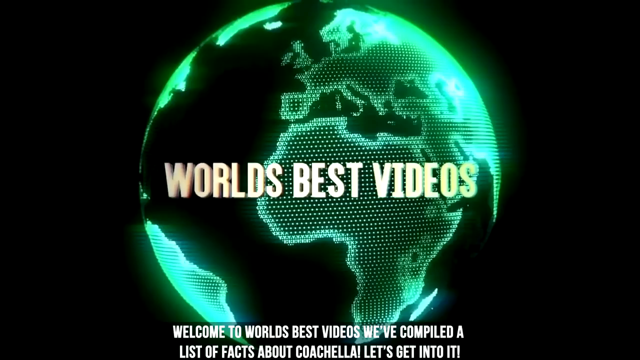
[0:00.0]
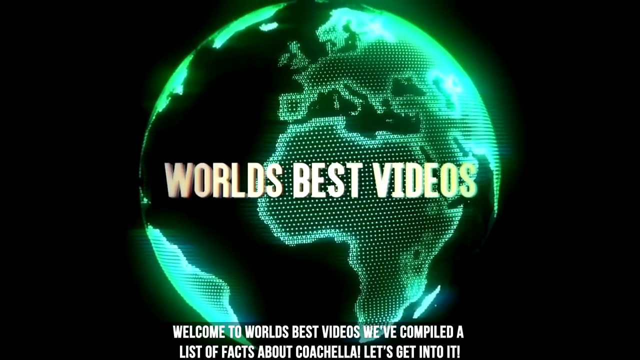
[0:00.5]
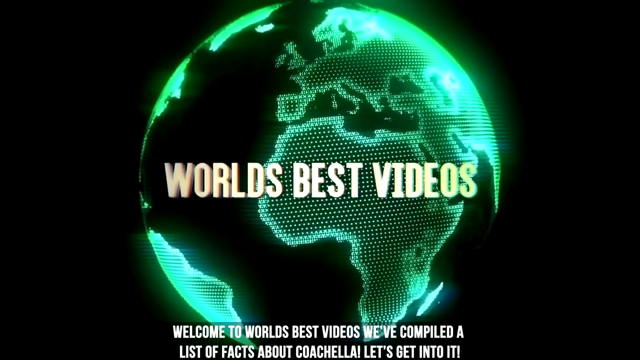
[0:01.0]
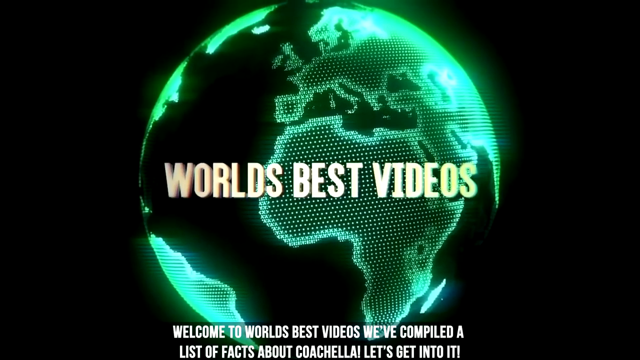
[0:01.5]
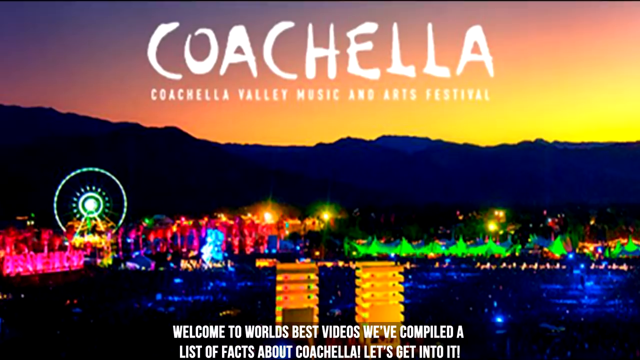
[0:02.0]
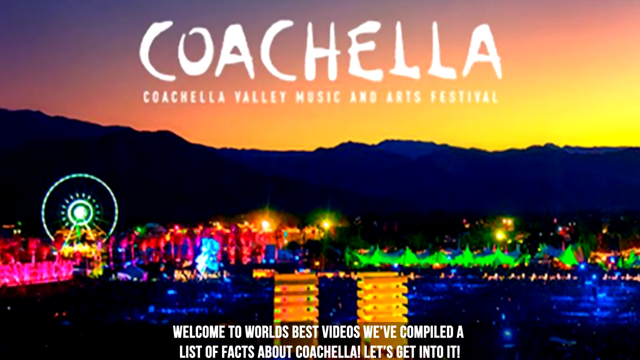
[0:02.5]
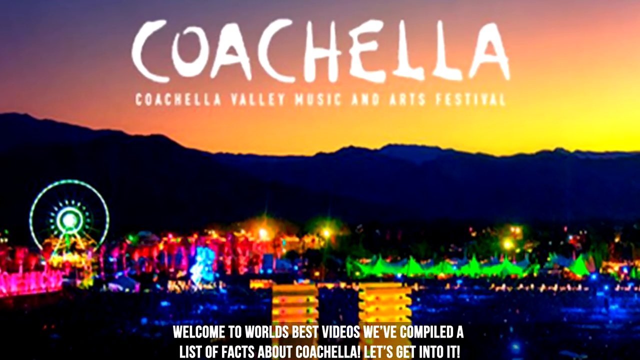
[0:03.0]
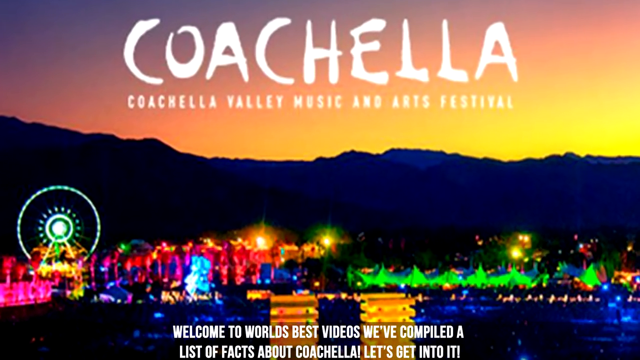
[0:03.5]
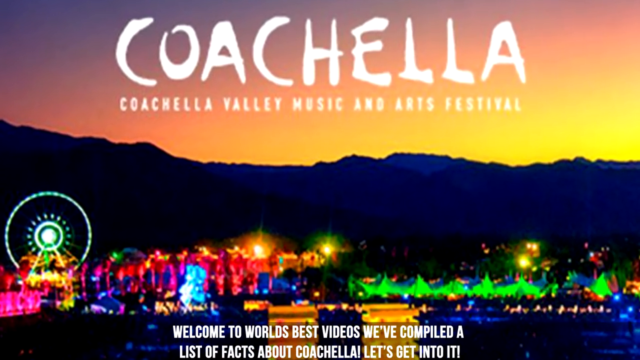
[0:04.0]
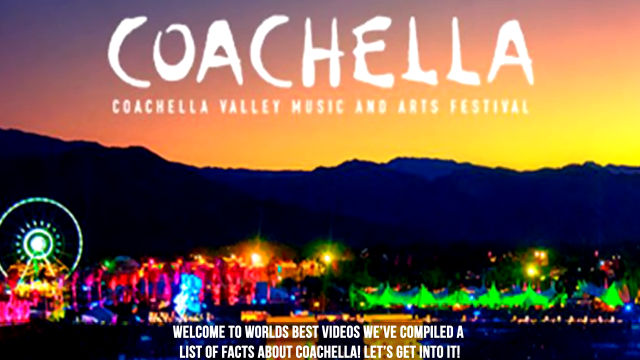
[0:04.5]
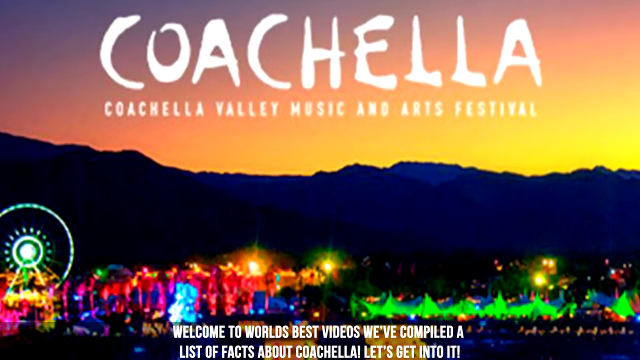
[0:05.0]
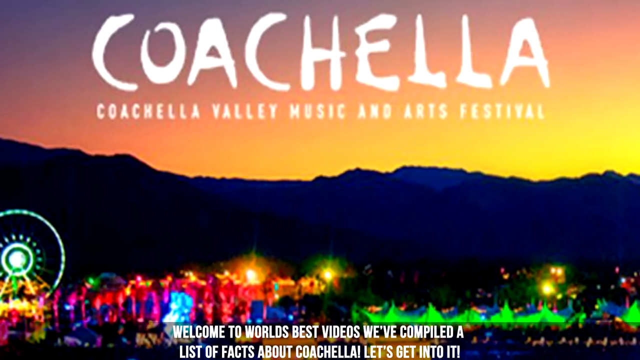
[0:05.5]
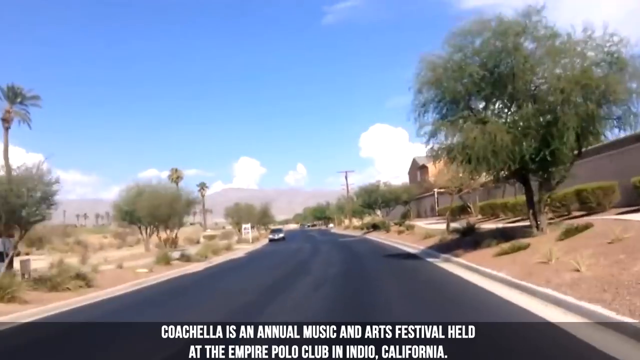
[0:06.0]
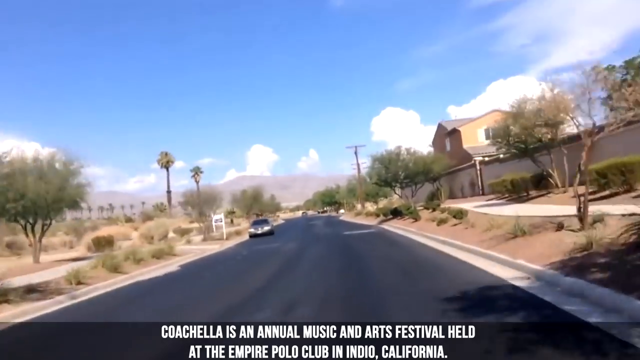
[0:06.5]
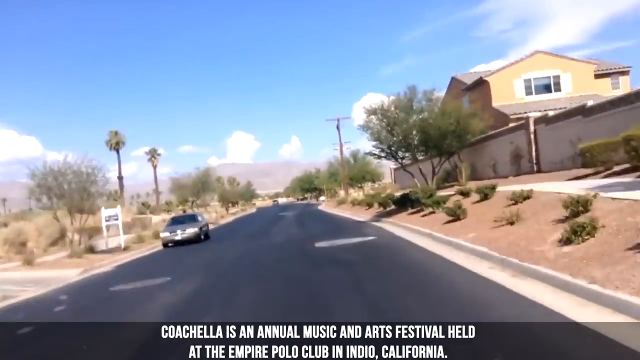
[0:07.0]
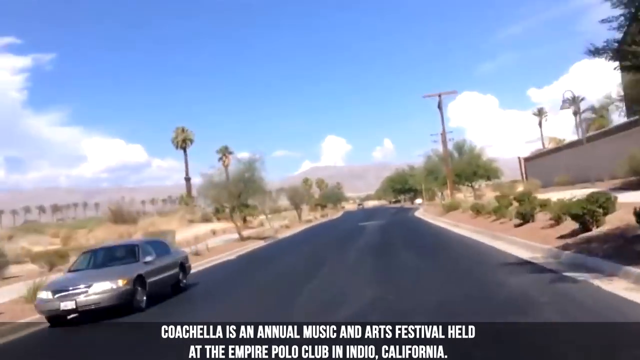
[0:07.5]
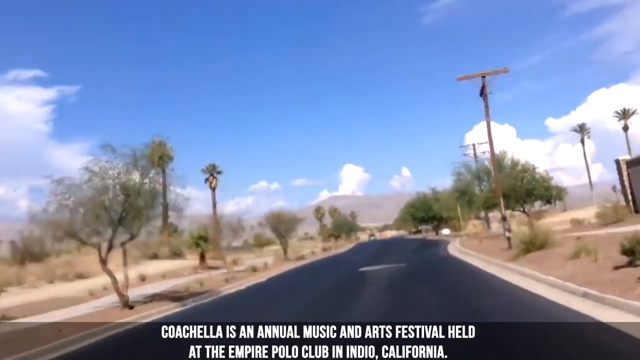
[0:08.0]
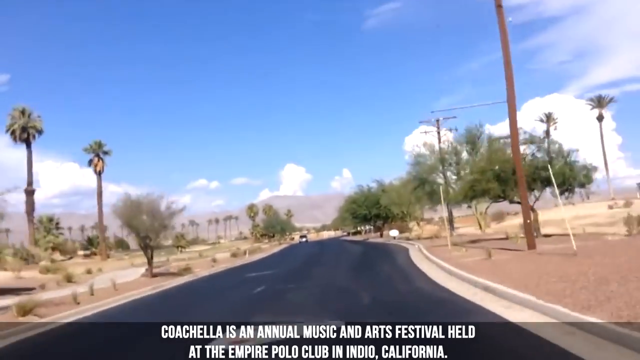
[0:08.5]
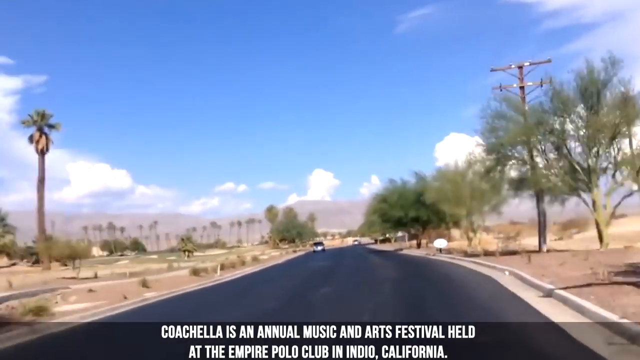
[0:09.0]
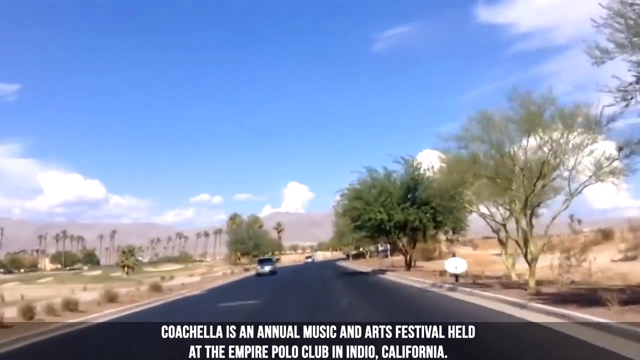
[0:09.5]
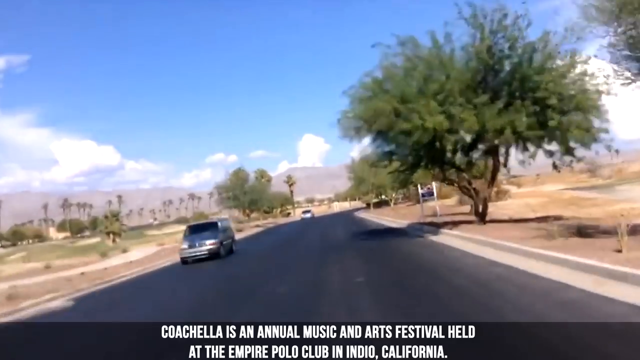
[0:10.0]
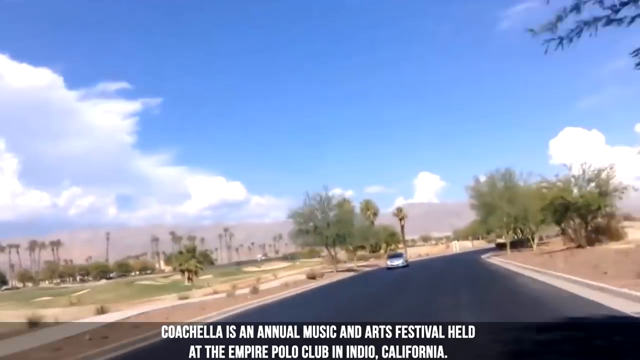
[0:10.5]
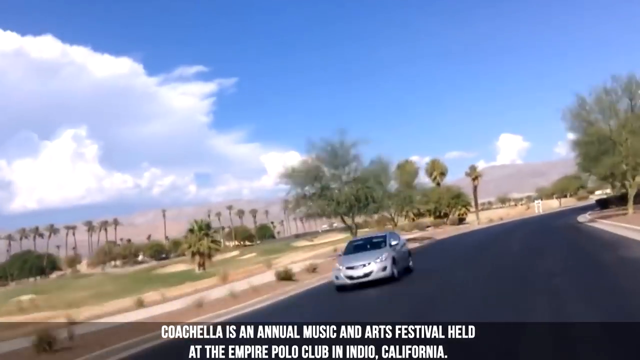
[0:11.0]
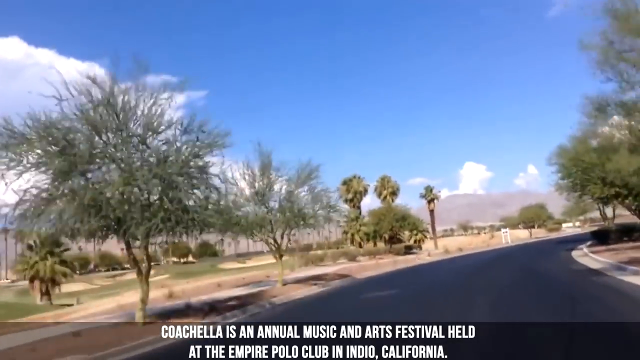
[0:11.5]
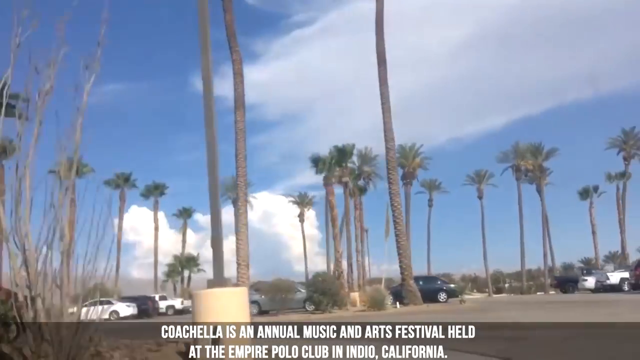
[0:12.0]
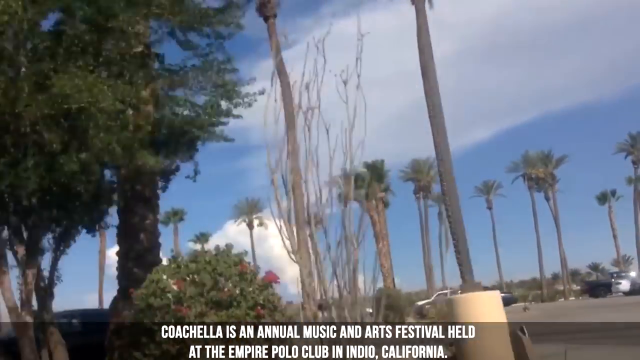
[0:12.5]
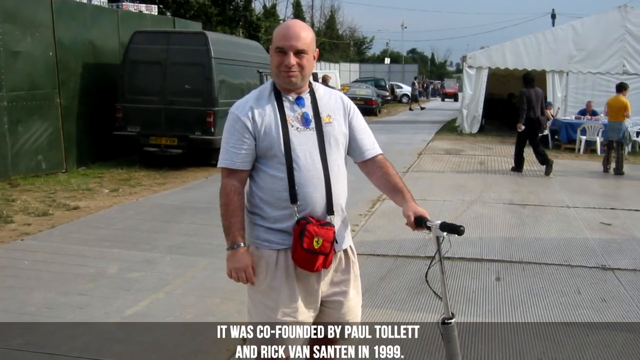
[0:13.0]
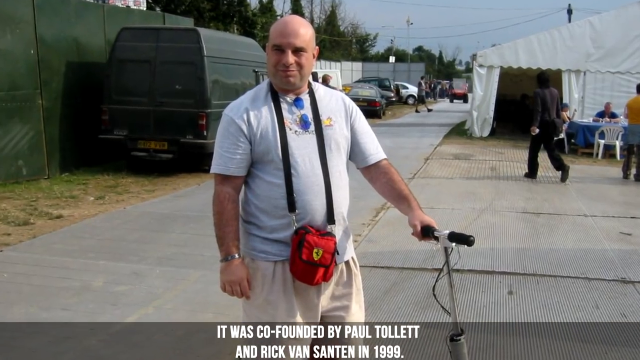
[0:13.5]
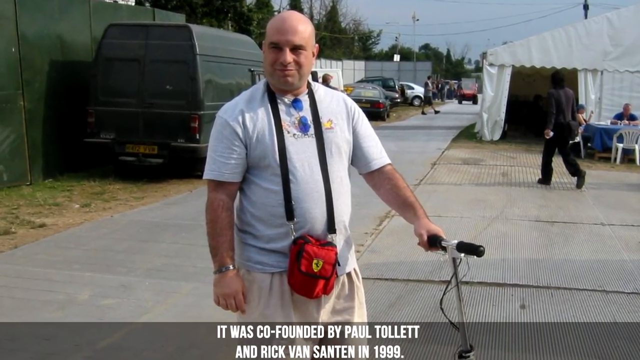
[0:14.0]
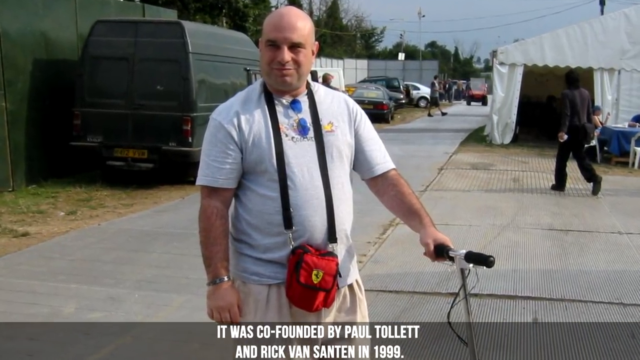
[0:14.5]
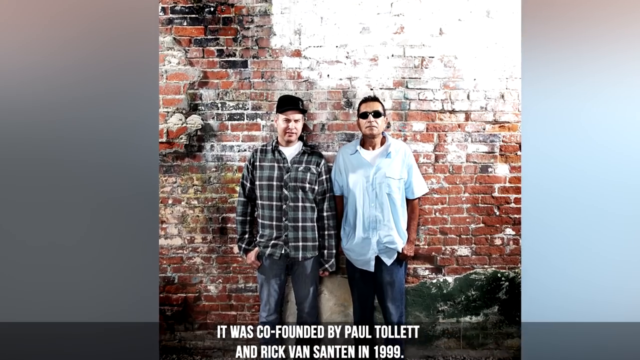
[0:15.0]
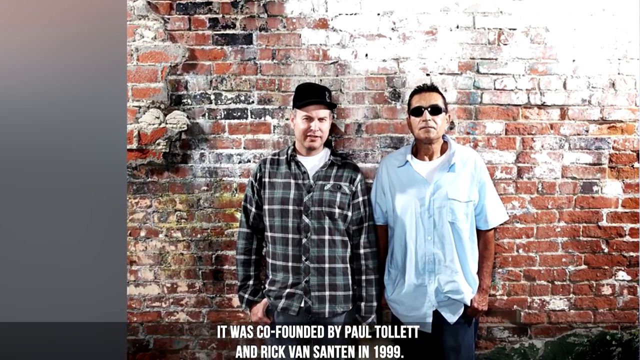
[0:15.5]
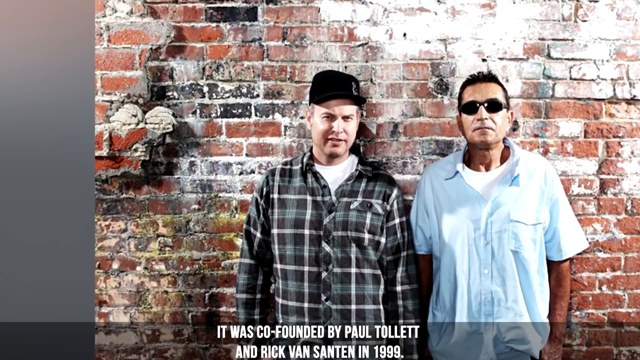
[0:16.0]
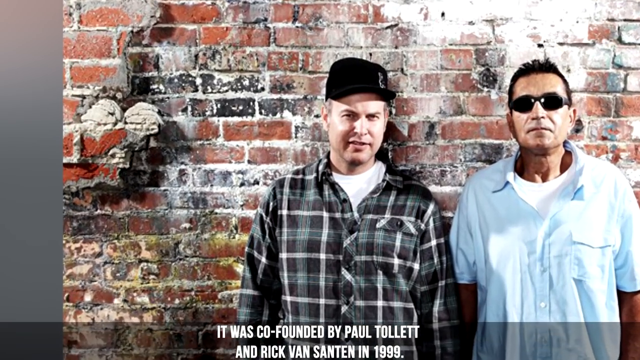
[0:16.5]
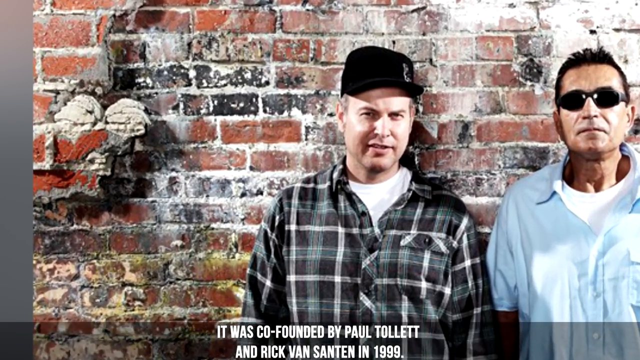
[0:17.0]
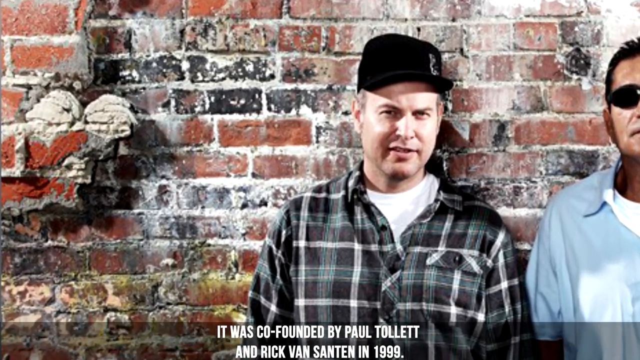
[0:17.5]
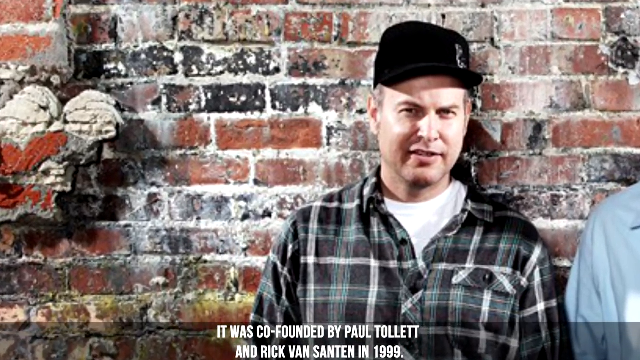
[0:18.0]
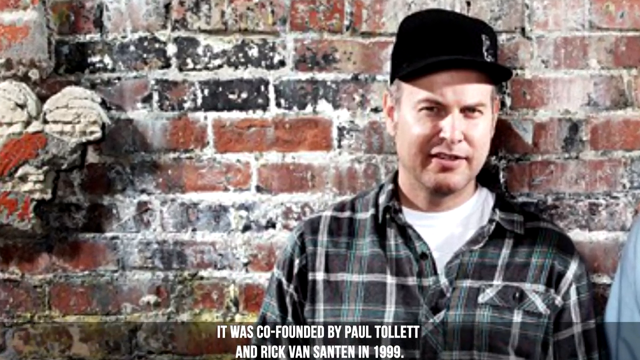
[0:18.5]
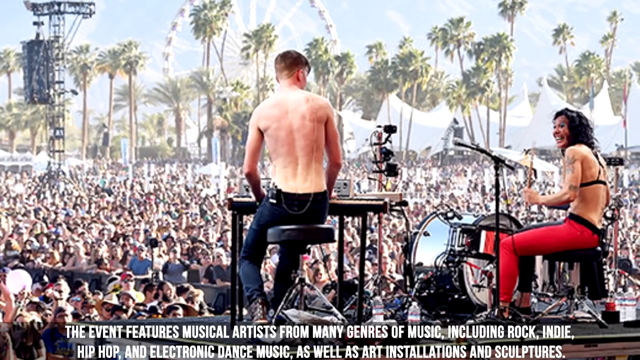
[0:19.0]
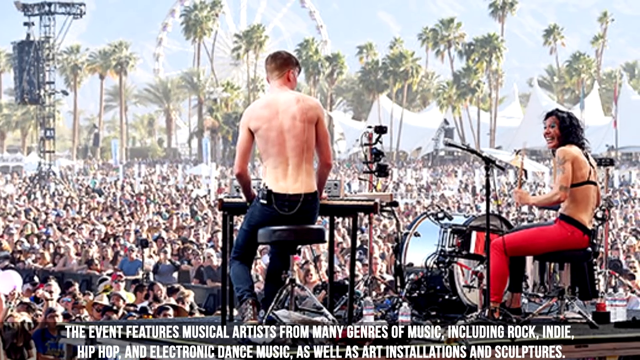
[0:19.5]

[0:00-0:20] The video opens on an image of the Earth as seen from space or just outside it, colored a luminous green and looking very computer generated. White text in all capital letters in the center of the screen, on top of the Earth, reads "world's best videos", and the Earth rotates anti-clockwise. A cut leads to a still image with text at the top reading "Coachella, Coachella Valley Music and Arts Festival". The image is a long shot of what looks like a sort of fairground, apparently Coachella, with a ferris wheel to the left, lots of things with luminous lighting and pink screens, hills in the background, and above the hills an orange sunset that is fading away. The camera zooms in on the still image while the word Coachella at the top remains. Next comes a sped-up point-of-view shot, apparently from a car dashboard, of a car driving up a road. Text at the bottom reads "Coachella is an annual music and arts festival held". The road is black and runs beside a sort of desert area; there is one house to the right of the screen, trees lining the sides and some small hedges. It is a sunny day with a blue sky and a few clouds. The sped-up image sort of vibrates as it moves, and a car passes on the left. The drive continues, with very sandy desert areas along the sides of the road and a few green trees lining it. A cut leads to a slowed-down moving image that appears to be in a car park, with the camera slightly tilted up toward some trees. Then a still image shows a man standing in the center of the frame in a white T-shirt, with a kind of fanny pack: a black strap goes over the back of his neck and around the front, and a red fanny pack hangs at his front. His right arm is by his side; his left arm is stretched out in front of him and slightly elevated, his palm on what look like the black handlebars of a scooter, fingers and thumb furled around them. Text at the bottom reads "it was co-founded by Paul Tollett"; the man is apparently the co-founder of Coachella. The camera zooms in, and another still shows two people standing with their backs to a red brick wall that has some black and other colored bricks. The one on the left wears a green, black and yellow check shirt and a black baseball cap; the other wears a short-sleeved shirt and black sunglasses. Both have their hands down by their sides. The camera moves in and focuses on the person on the left in the black baseball cap, apparently Paul Tollett, before a cut to another still image.